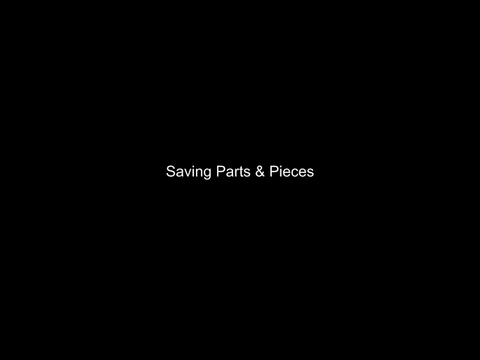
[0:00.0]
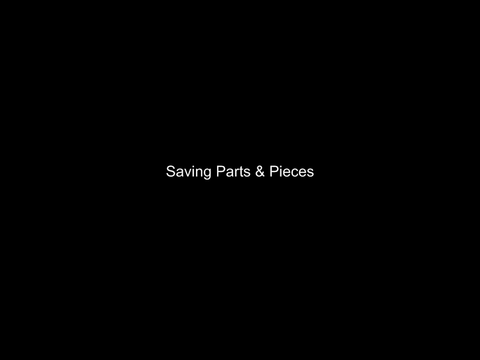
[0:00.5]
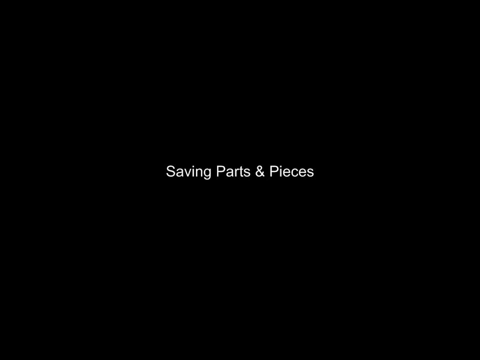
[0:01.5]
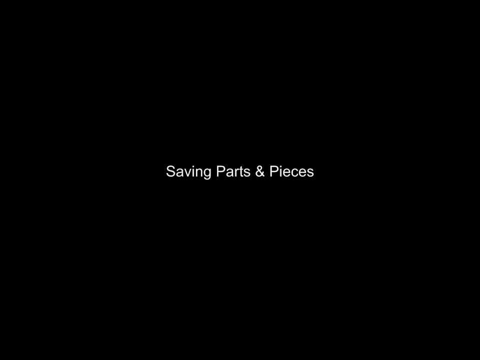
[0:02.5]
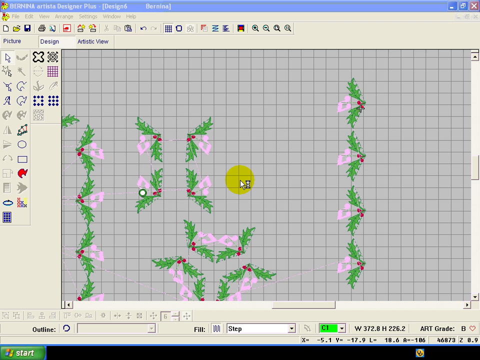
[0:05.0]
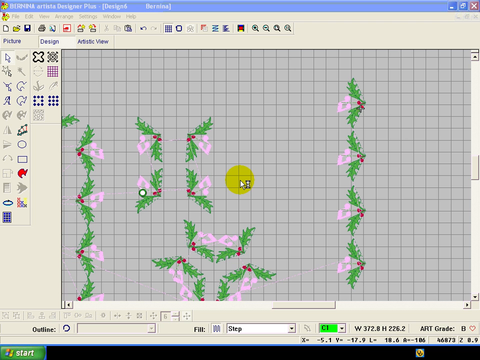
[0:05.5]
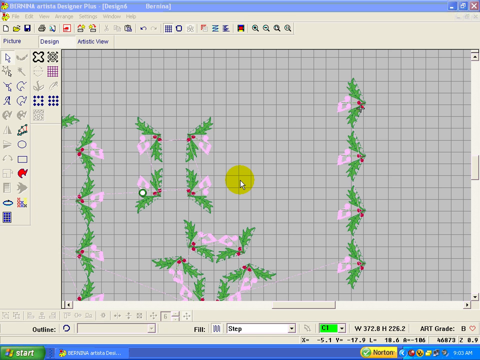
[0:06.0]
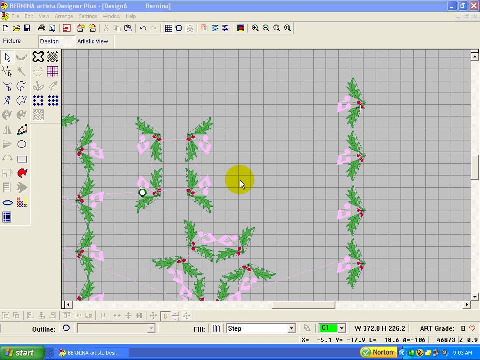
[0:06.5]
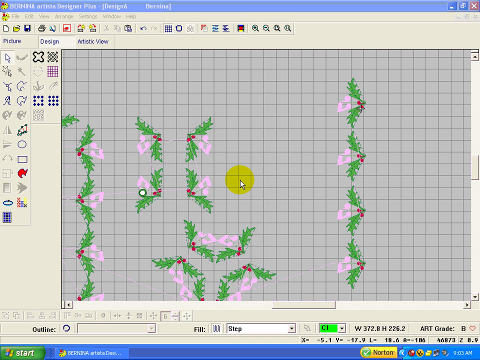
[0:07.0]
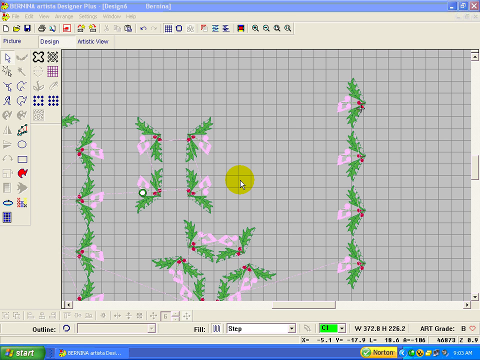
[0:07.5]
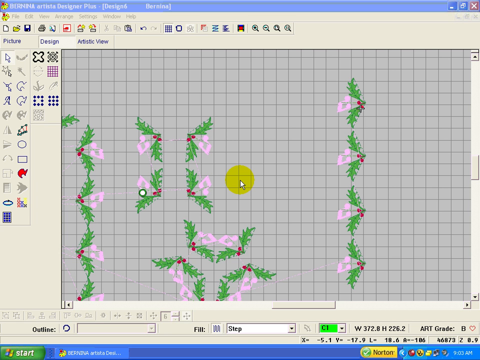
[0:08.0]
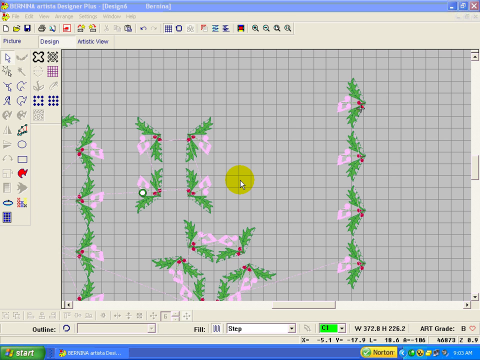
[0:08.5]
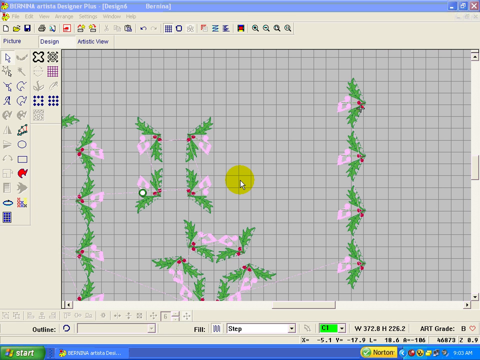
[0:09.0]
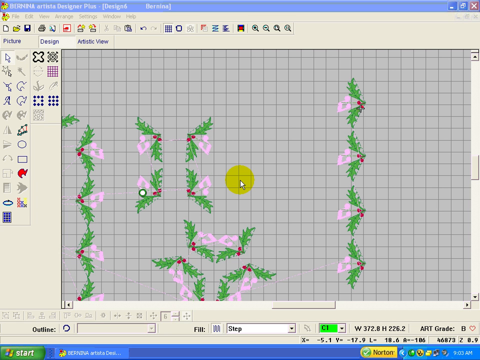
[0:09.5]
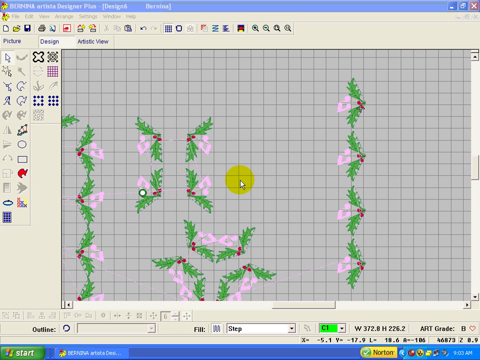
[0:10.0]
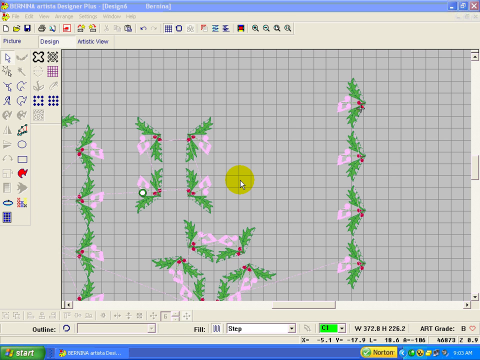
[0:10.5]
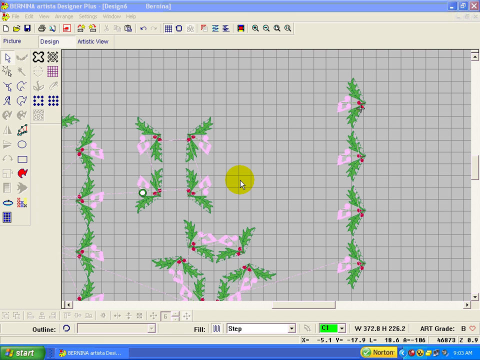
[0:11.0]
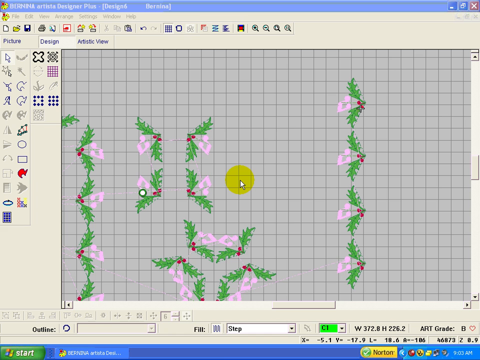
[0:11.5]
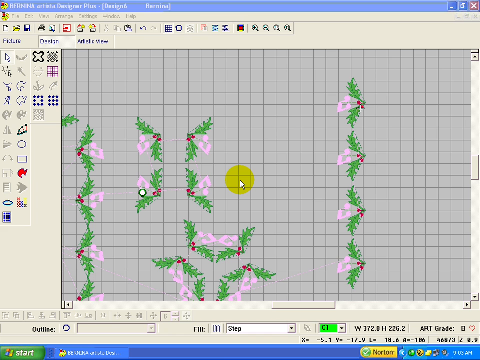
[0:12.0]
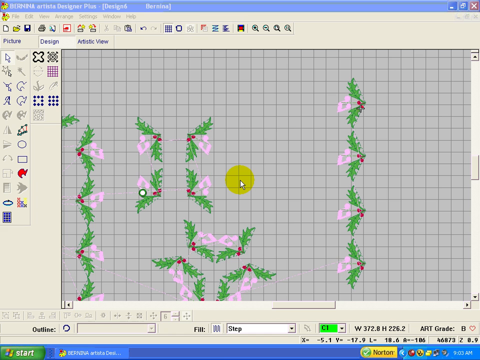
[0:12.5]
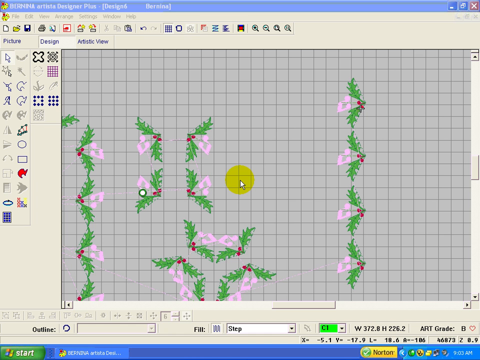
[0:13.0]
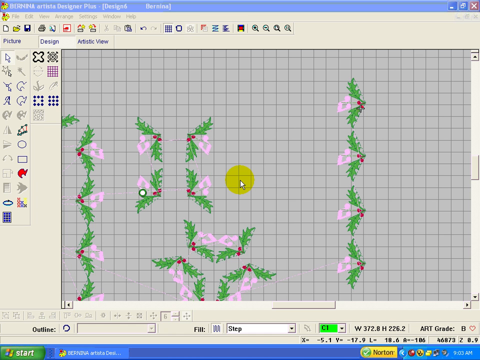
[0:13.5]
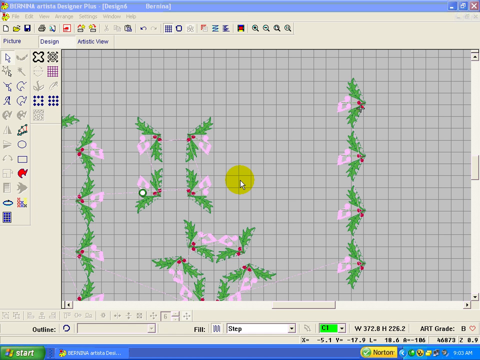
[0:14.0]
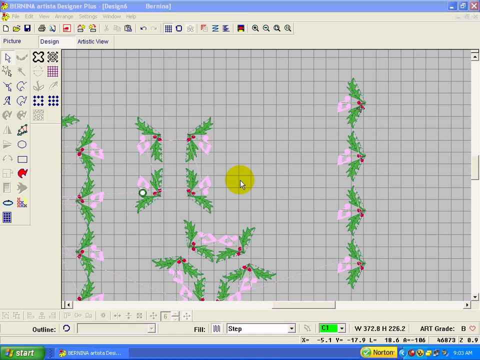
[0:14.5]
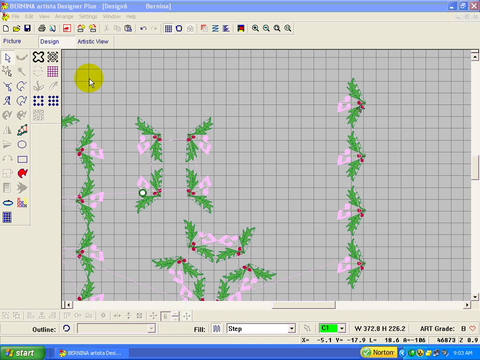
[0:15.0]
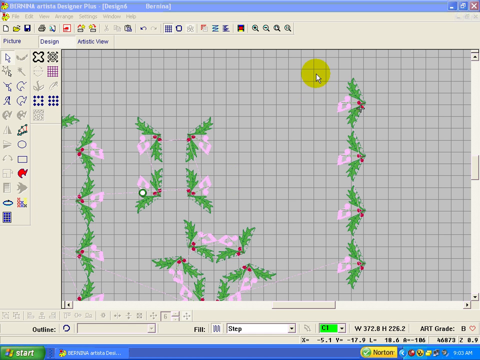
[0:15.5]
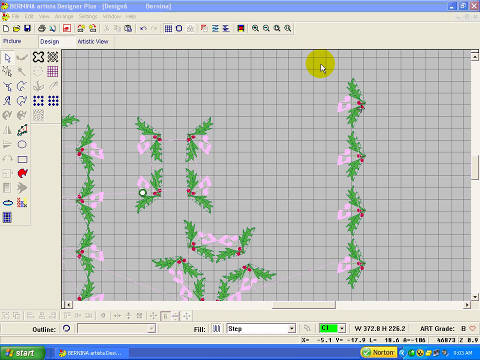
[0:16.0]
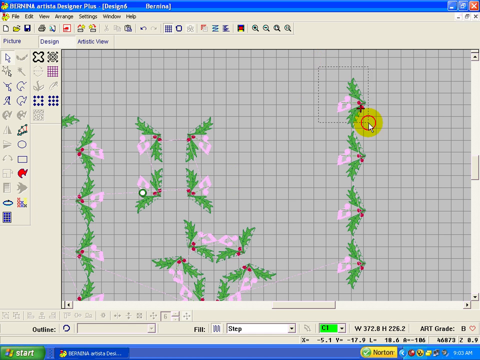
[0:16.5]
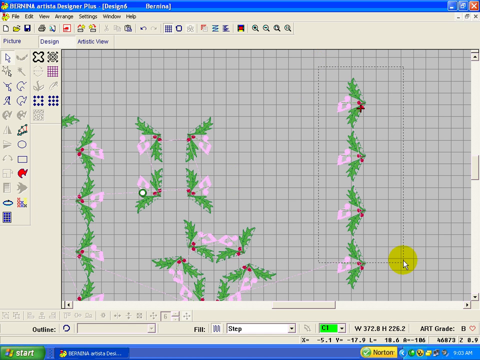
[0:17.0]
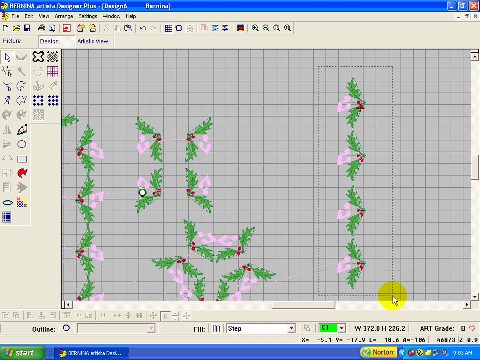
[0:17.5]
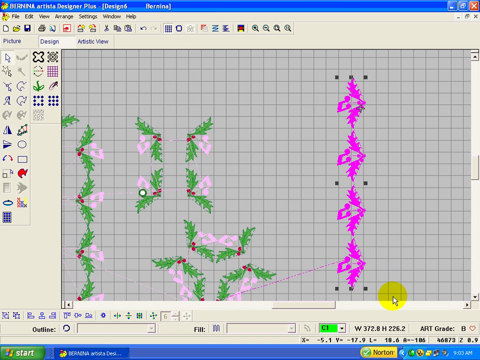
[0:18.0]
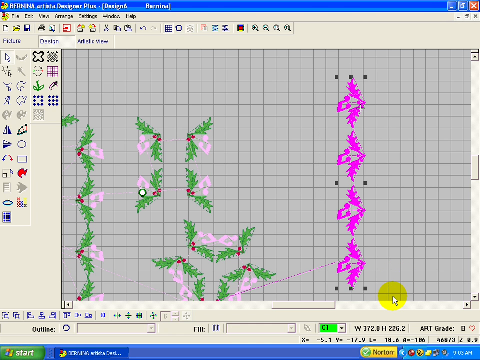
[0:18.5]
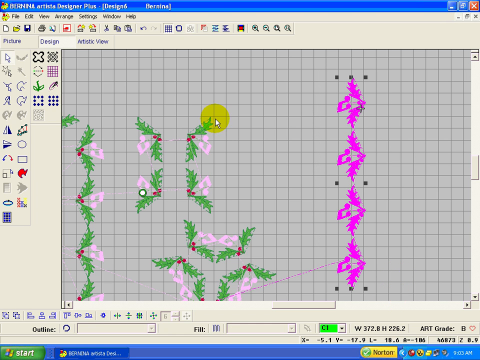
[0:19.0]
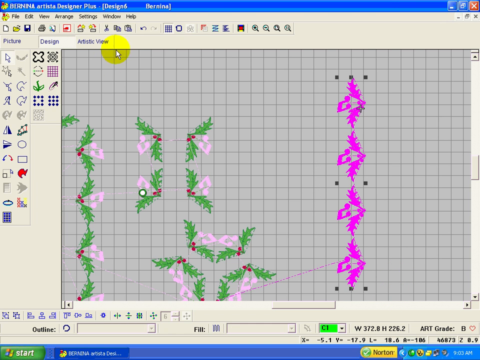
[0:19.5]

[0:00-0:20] The video opens on a black screen with small white text in the very center reading "saving parts and pieces." It then cuts to a software program with a gray grid, its window full screen. A set of tools and icons runs down the left side, and the usual File, Edit, View and similar menus are at the top. Judging by the design, it seems to be an older version of Windows. Floral, leafy decorations with red berries are scattered across the grid, and the mouse cursor is marked by a pale yellow circle. The user drags a selection box over the four decorations on the right. About 19 of these leafy, ornate decorations are visible, though some are cut off so only parts of them show.